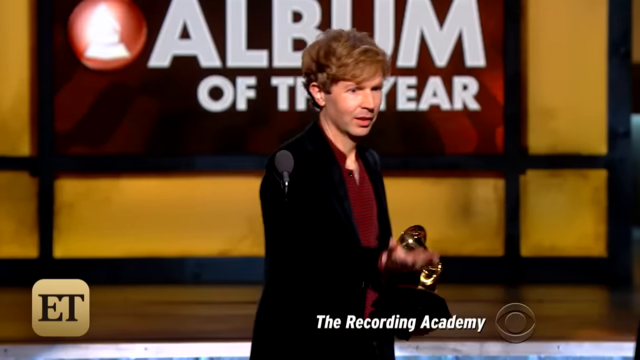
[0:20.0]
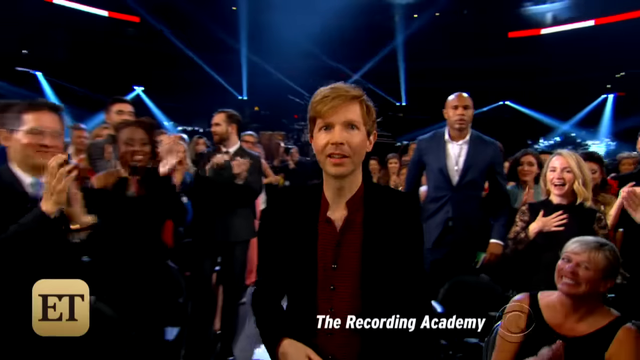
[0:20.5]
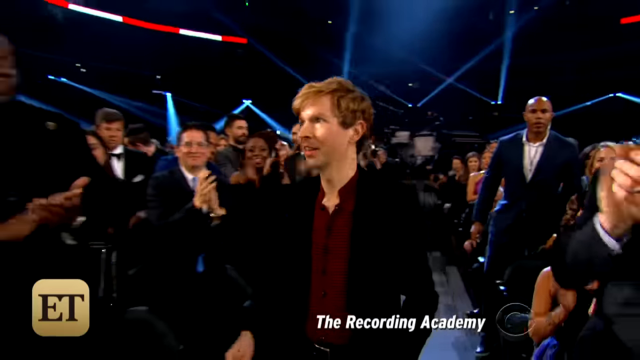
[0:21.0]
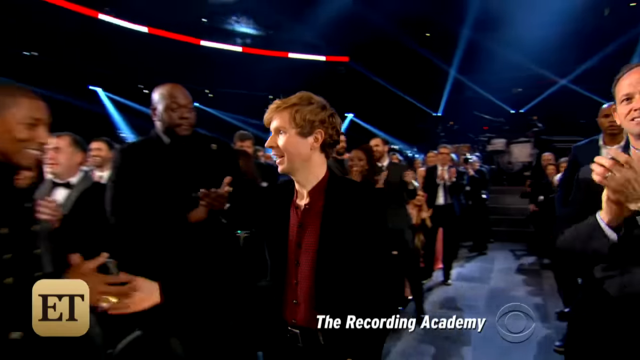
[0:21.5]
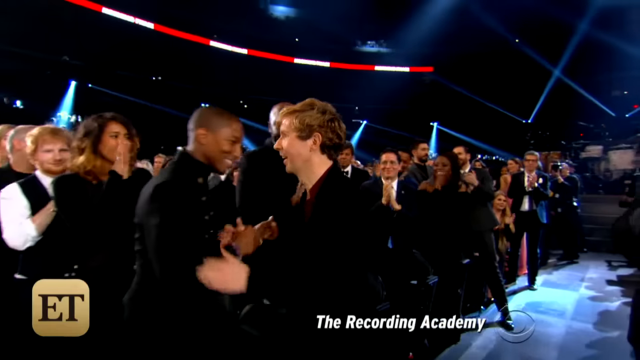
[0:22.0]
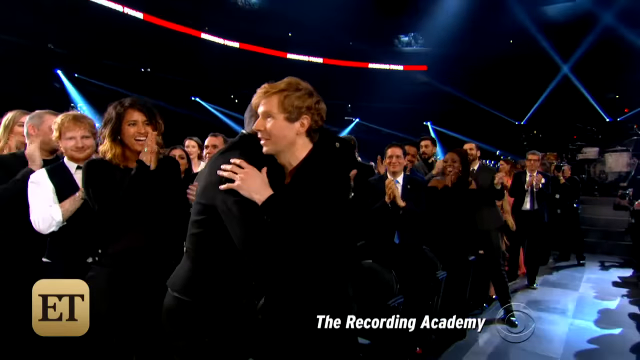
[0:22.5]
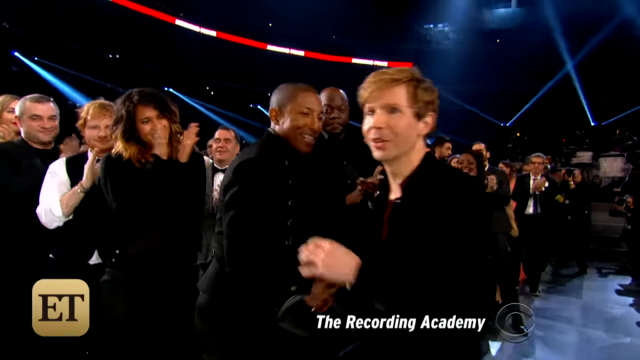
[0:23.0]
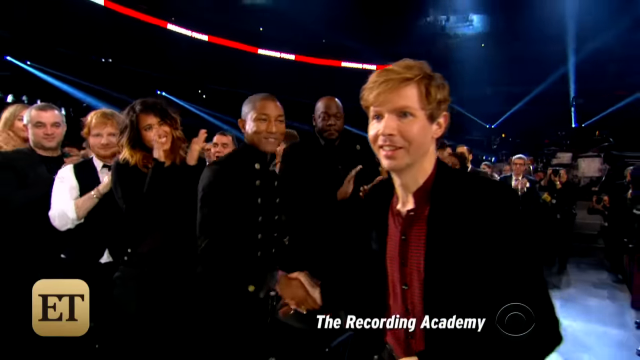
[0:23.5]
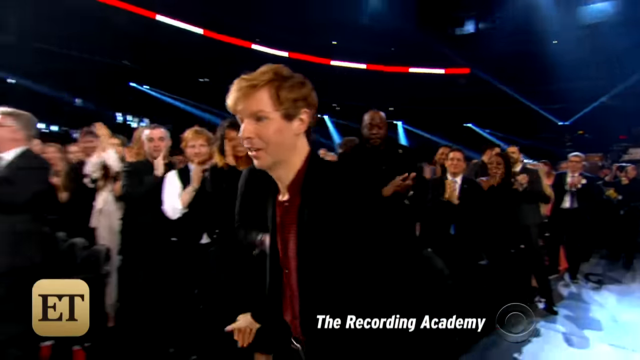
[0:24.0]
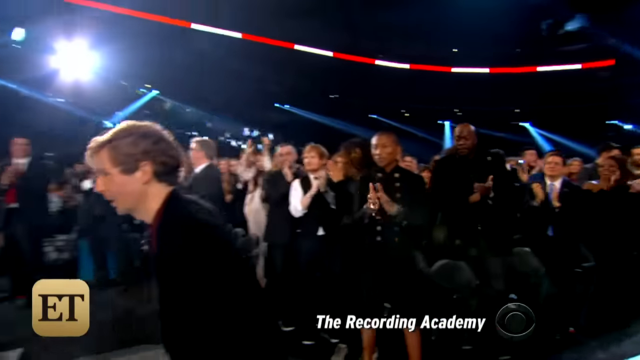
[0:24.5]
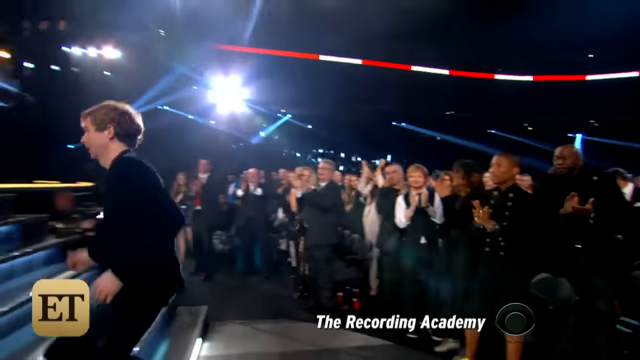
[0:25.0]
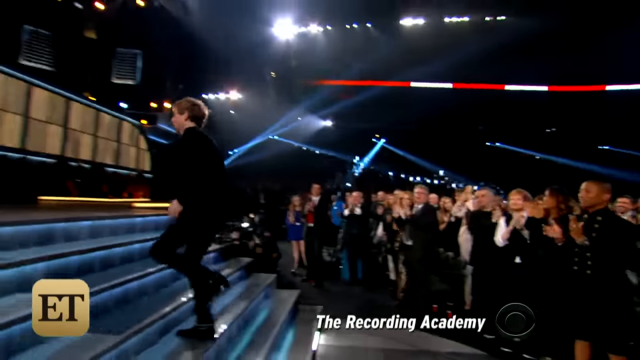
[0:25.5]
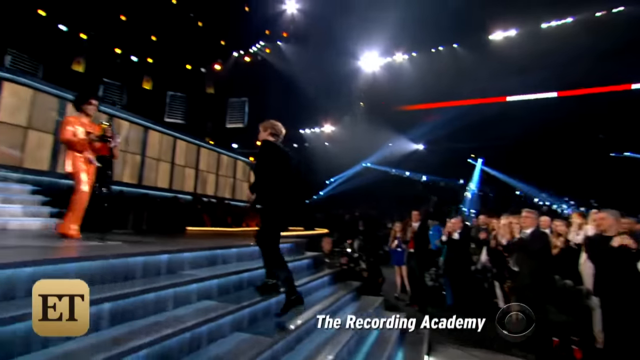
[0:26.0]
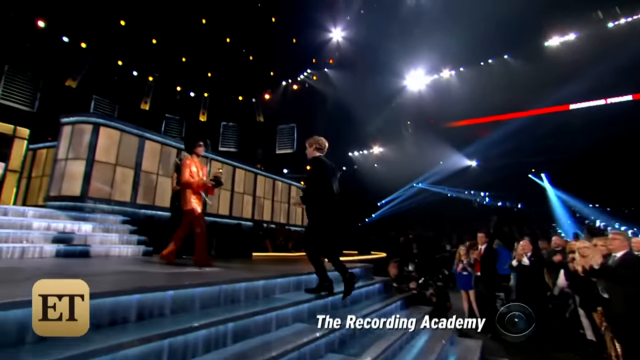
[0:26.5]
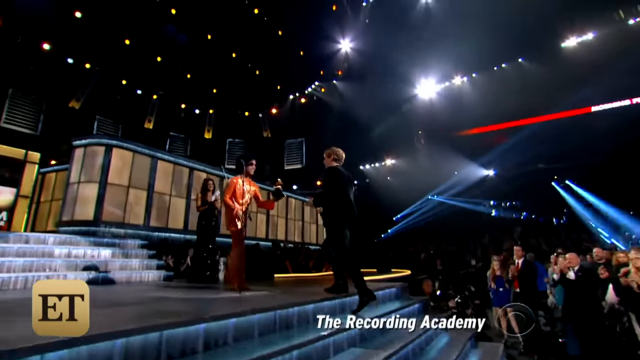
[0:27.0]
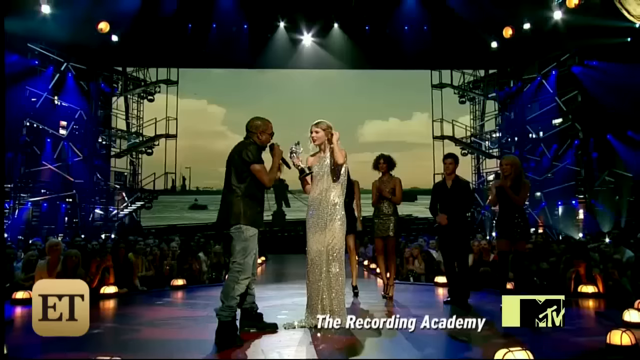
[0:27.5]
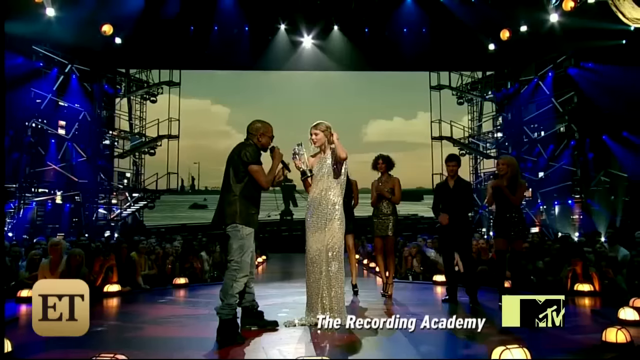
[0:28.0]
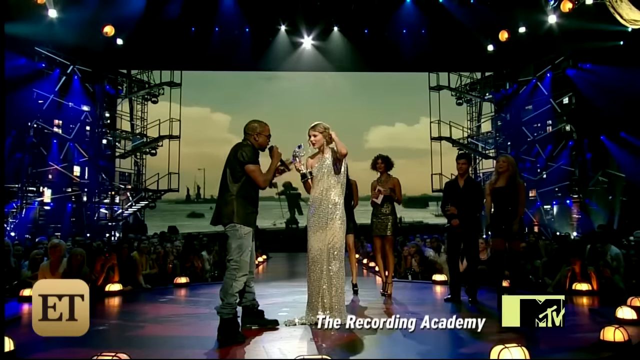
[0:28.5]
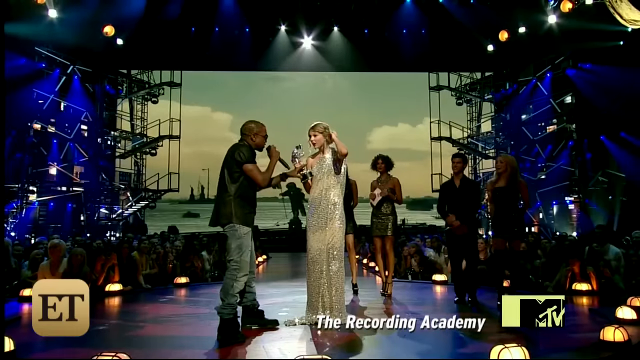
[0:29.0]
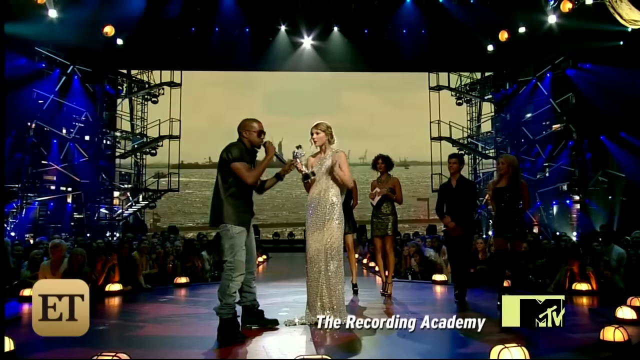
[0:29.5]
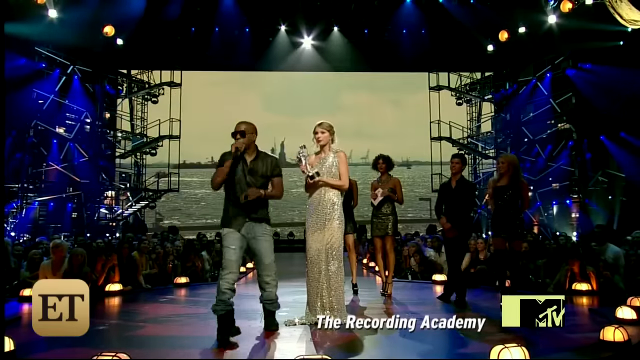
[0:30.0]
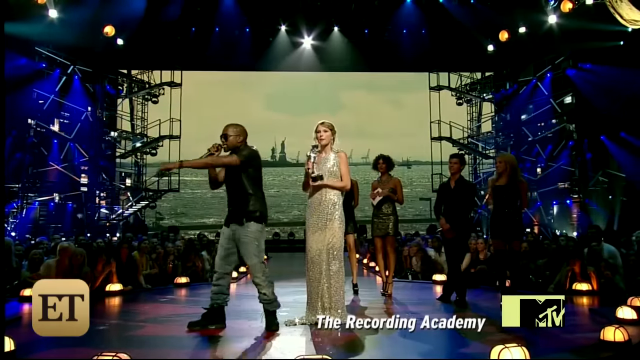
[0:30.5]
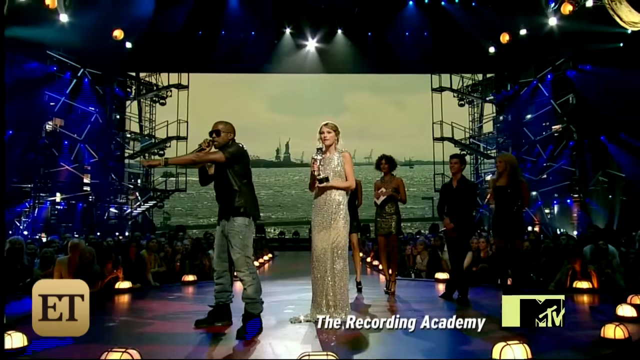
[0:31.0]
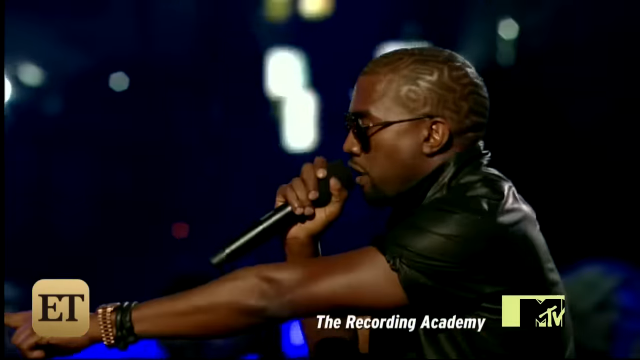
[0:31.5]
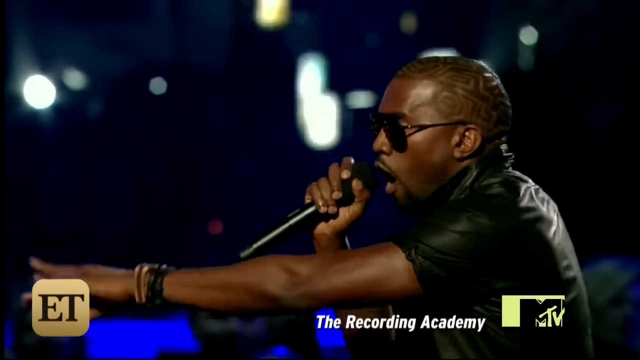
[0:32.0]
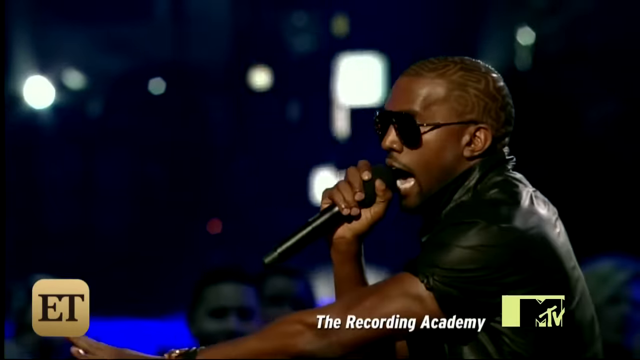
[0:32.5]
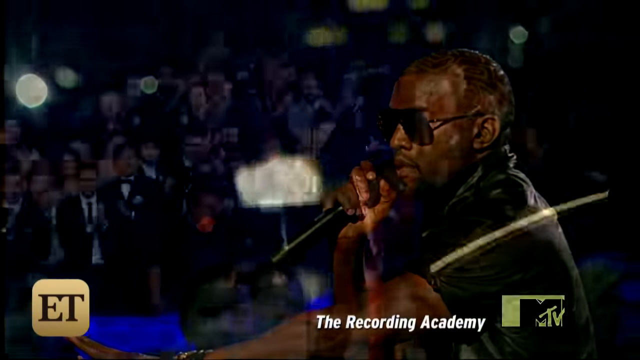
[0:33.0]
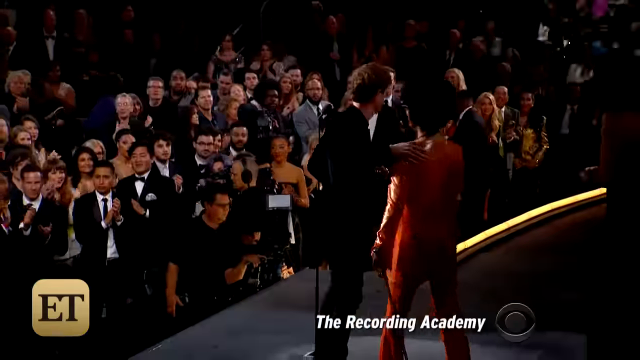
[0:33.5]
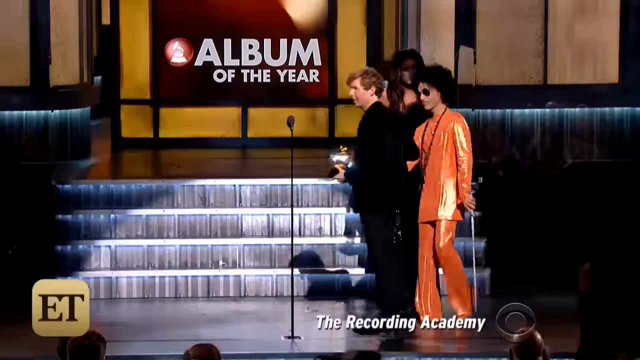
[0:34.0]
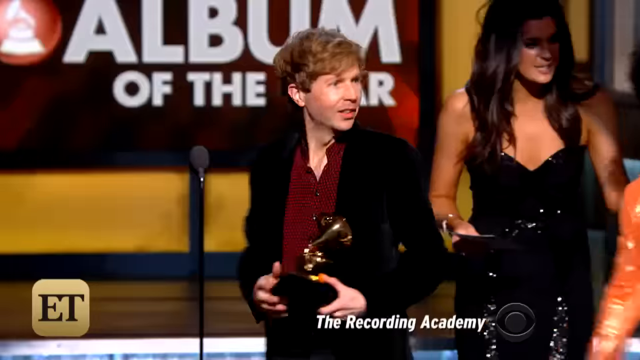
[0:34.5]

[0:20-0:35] Someone who has won from the Recording Academy goes on stage. Next, Taylor Swift is shown with an award in her hand while Kanye West interrupts. The video flips to someone who won; people are applauding and going on stage as the award is given. It flips again to Kanye West with a mic saying something beside Beyonce. Then someone walks up on stage to accept an award from Prince, who is dressed in purple. Kanye West is talking to Taylor Swift. Prince congratulates someone walking up on the stage who has just won an award, and Prince hands over the award. Kanye West talks to Taylor, then talks to the audience, saying something, and then someone is shown who has just won.